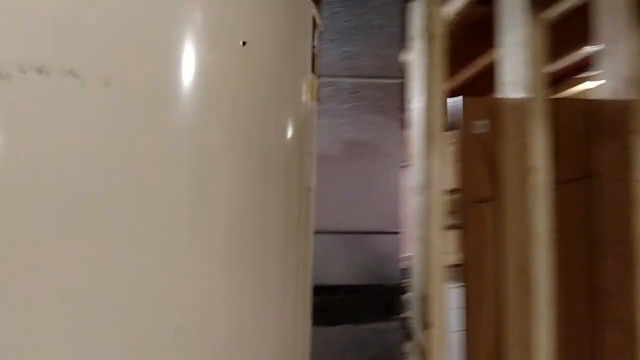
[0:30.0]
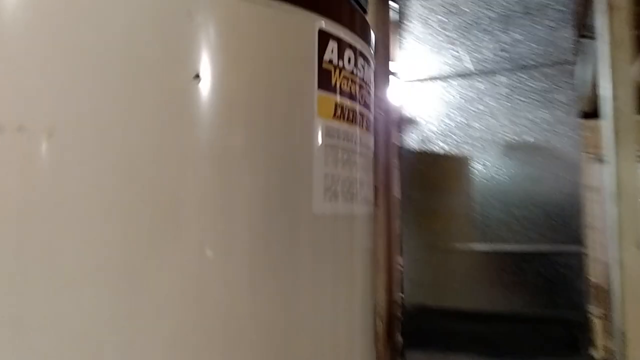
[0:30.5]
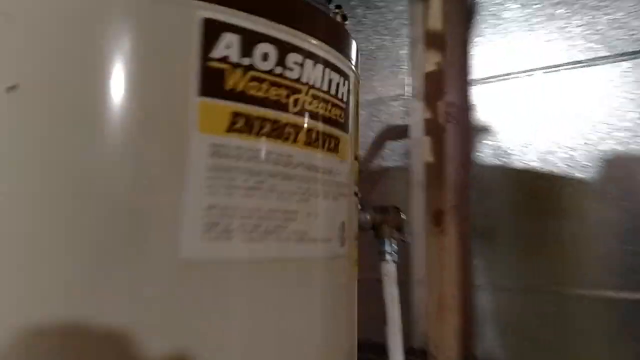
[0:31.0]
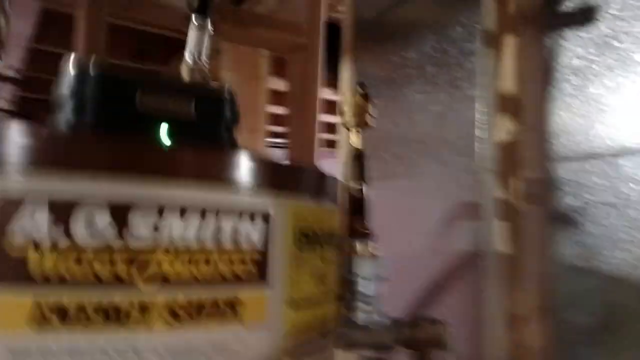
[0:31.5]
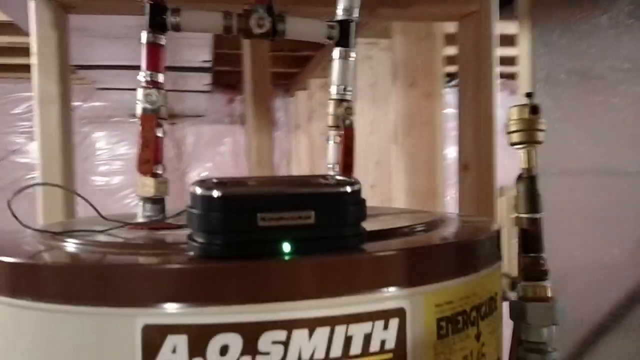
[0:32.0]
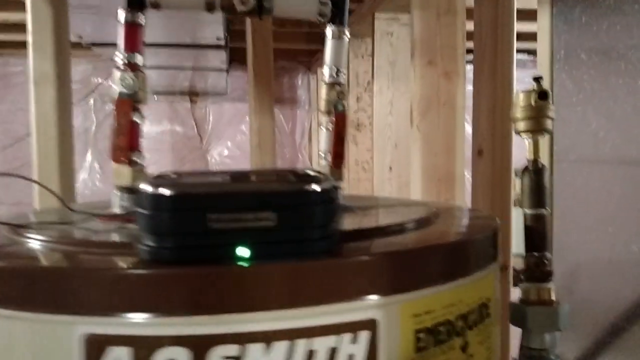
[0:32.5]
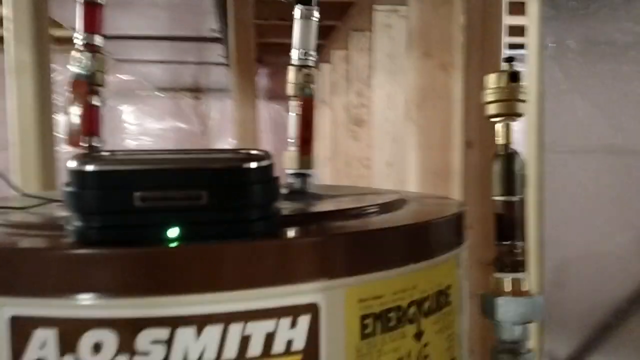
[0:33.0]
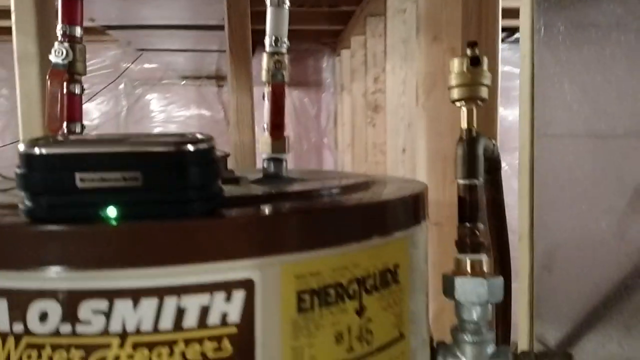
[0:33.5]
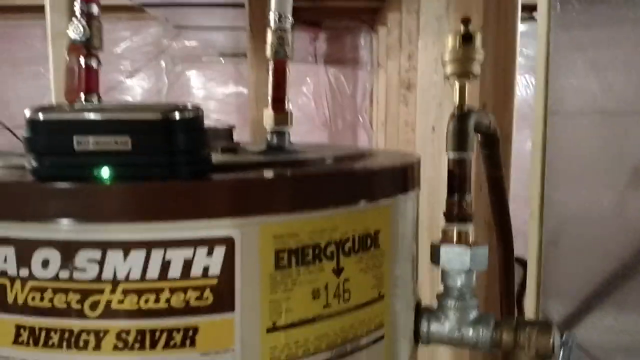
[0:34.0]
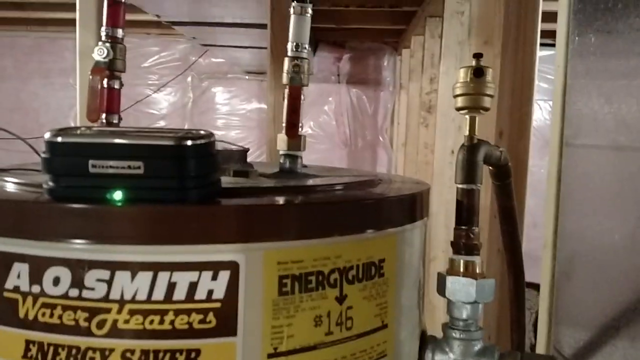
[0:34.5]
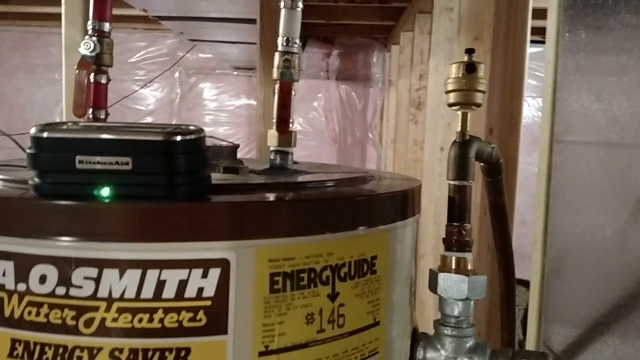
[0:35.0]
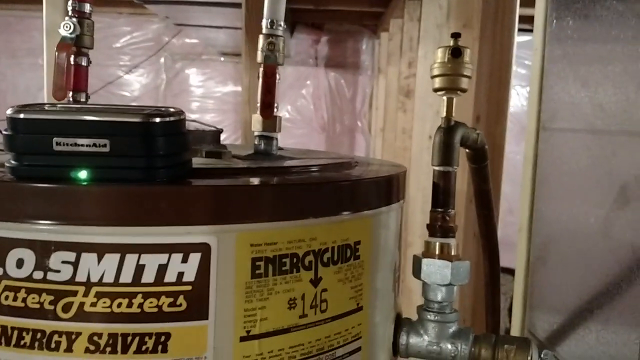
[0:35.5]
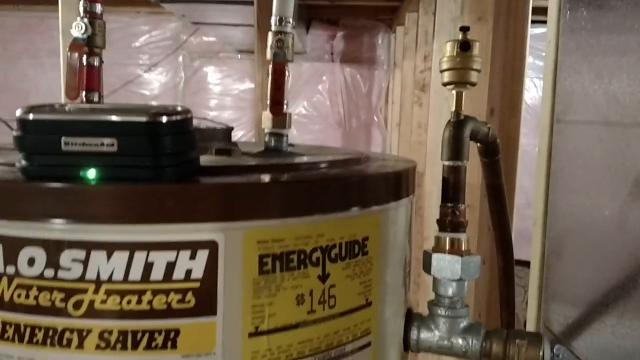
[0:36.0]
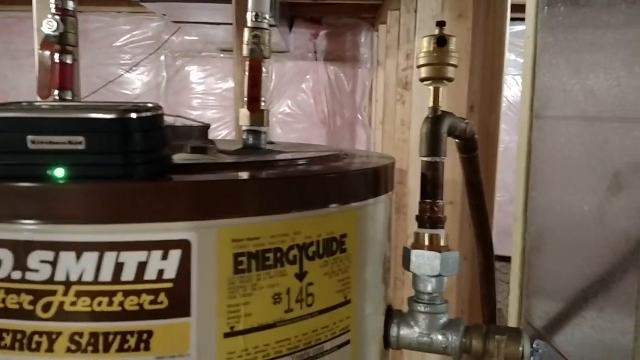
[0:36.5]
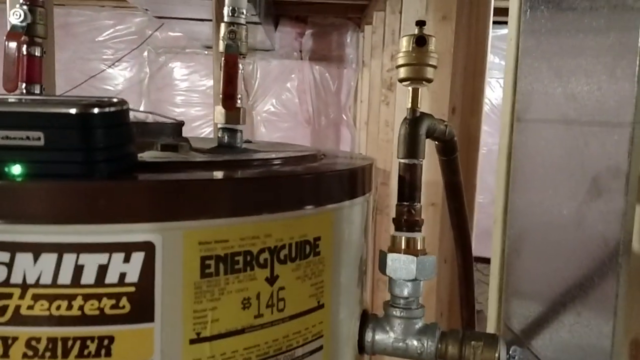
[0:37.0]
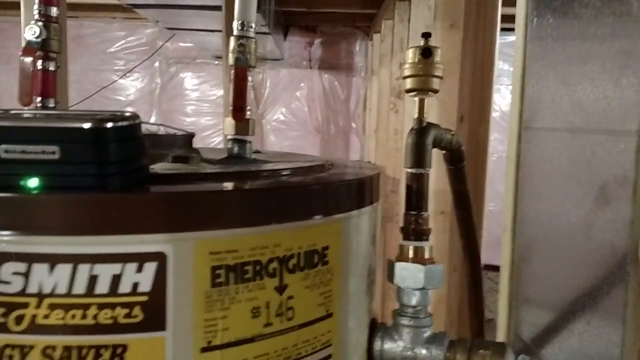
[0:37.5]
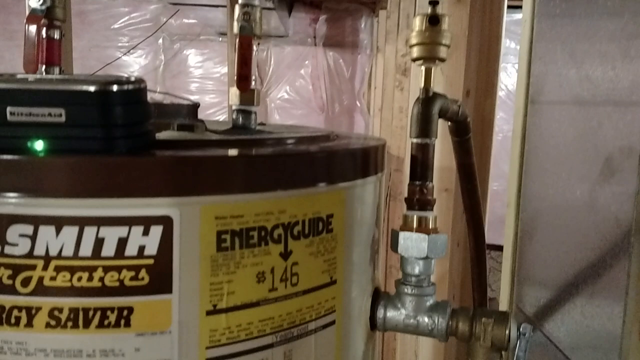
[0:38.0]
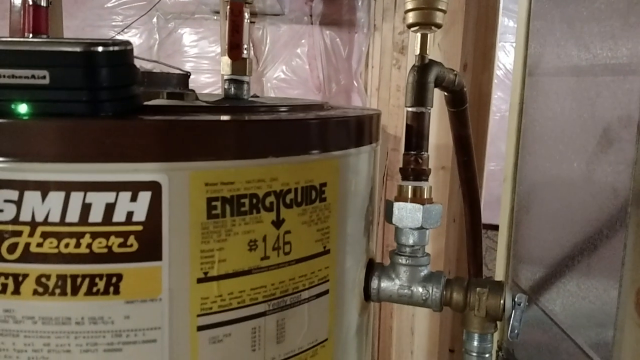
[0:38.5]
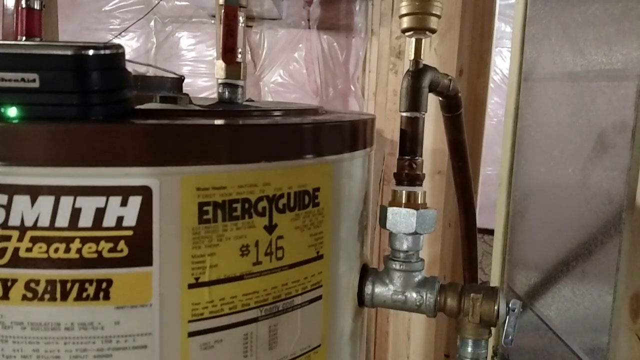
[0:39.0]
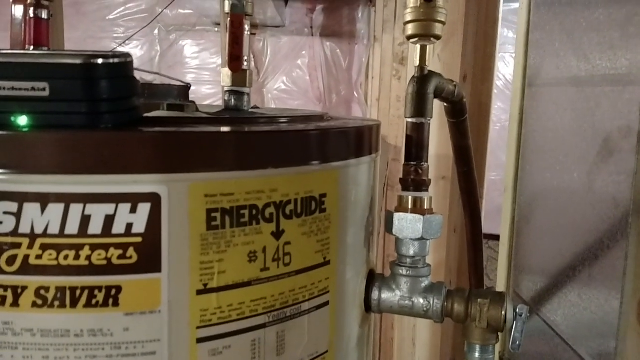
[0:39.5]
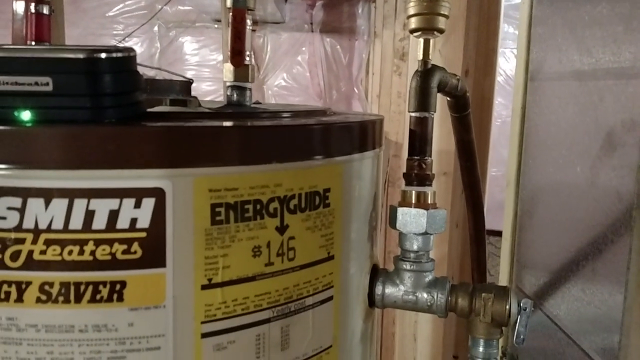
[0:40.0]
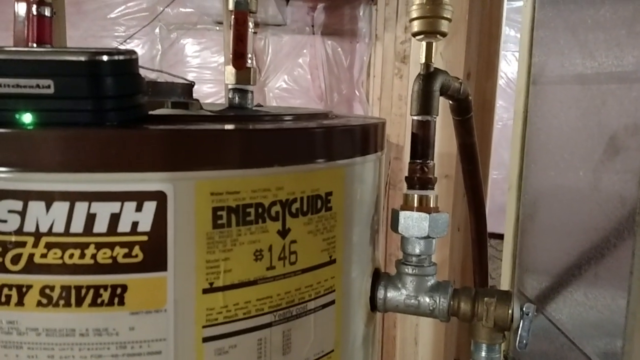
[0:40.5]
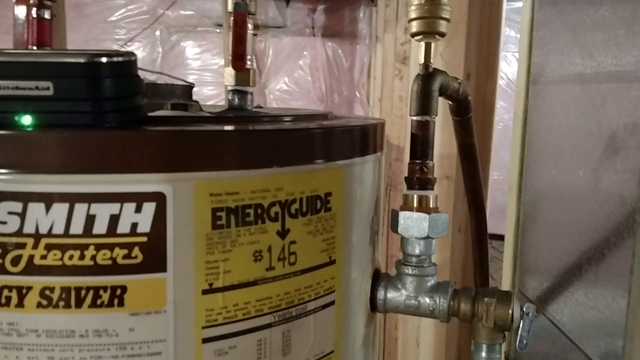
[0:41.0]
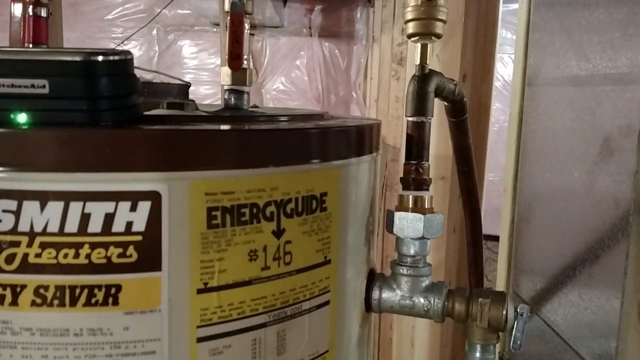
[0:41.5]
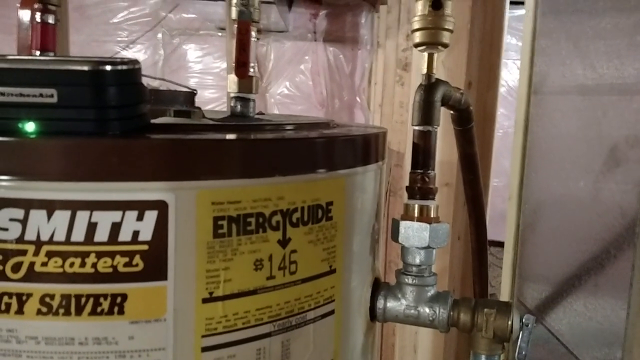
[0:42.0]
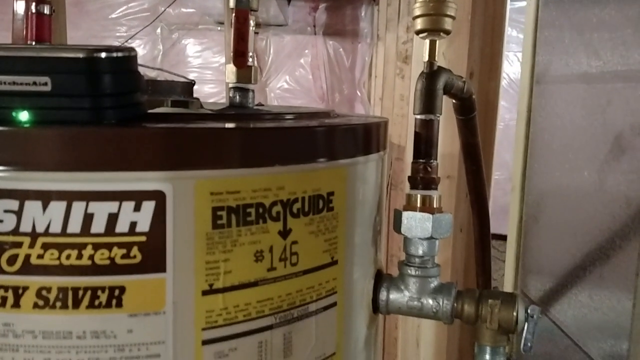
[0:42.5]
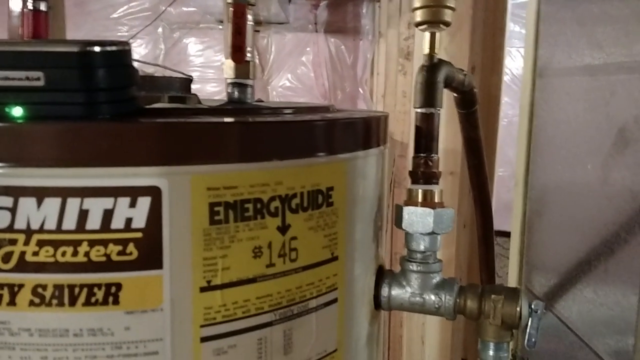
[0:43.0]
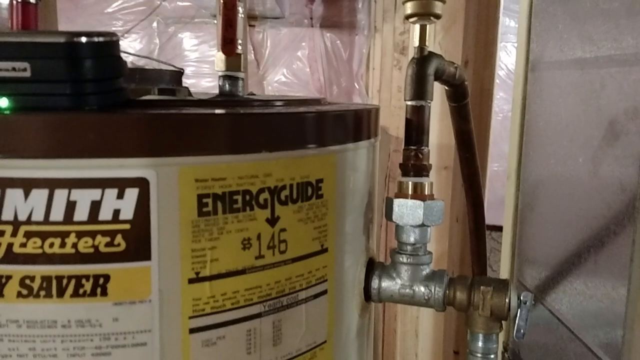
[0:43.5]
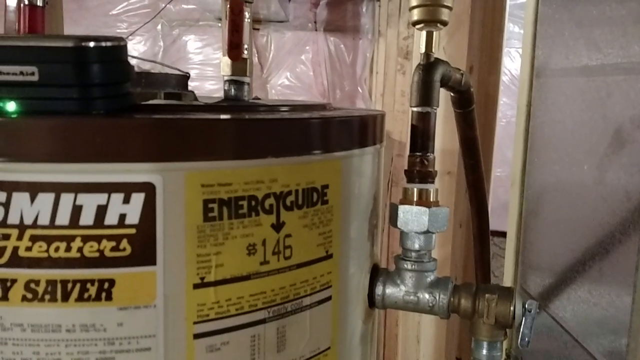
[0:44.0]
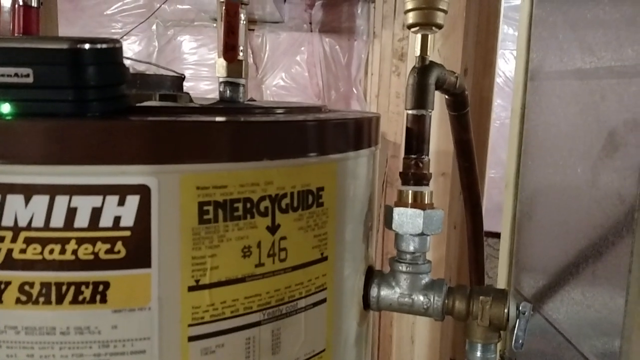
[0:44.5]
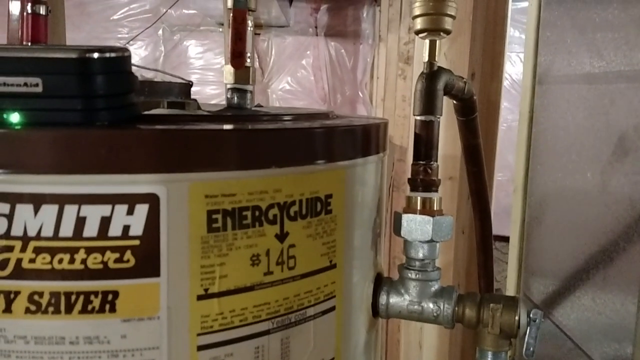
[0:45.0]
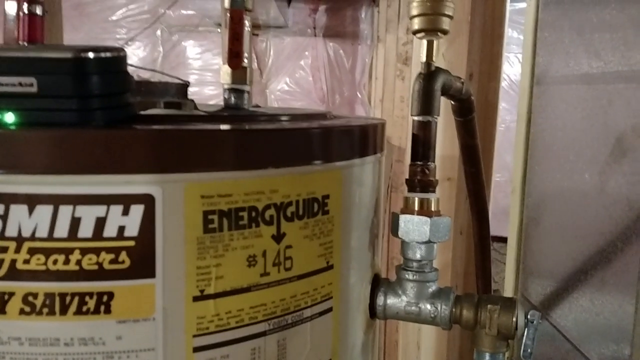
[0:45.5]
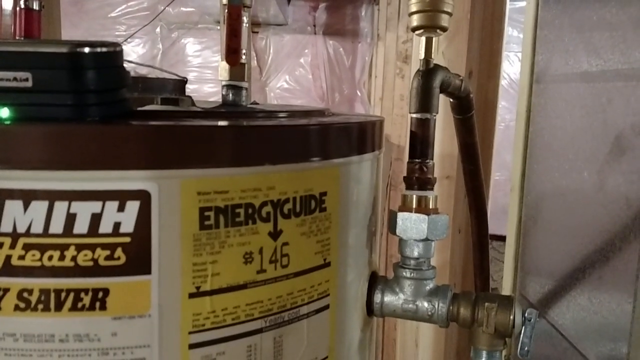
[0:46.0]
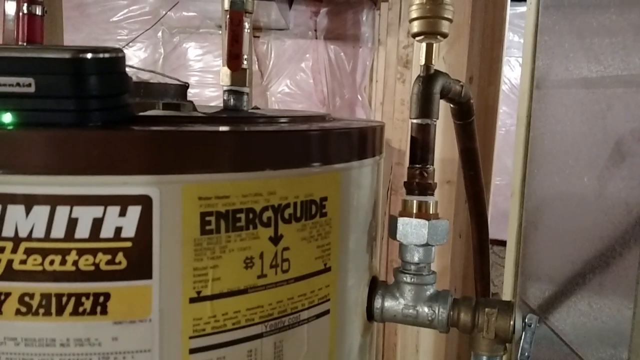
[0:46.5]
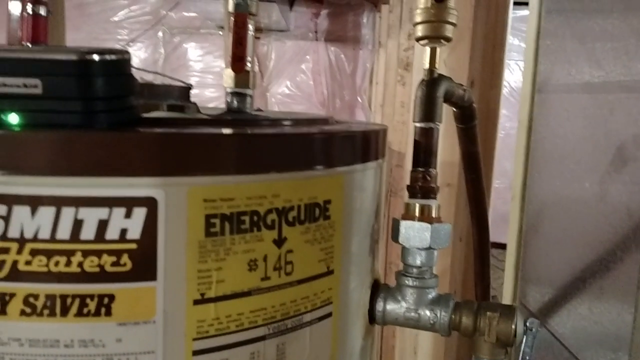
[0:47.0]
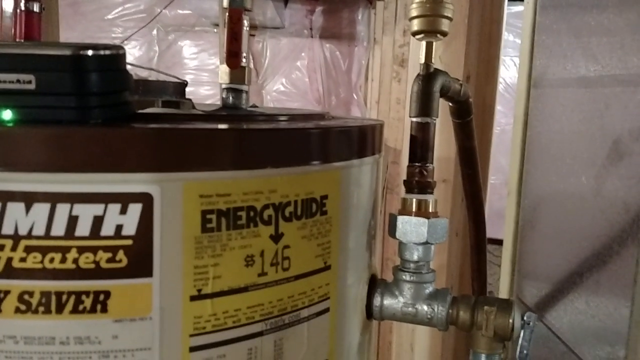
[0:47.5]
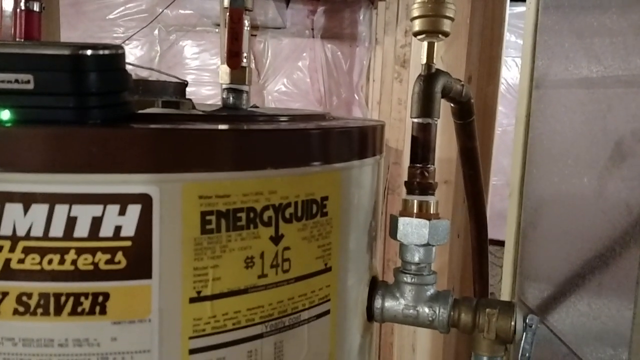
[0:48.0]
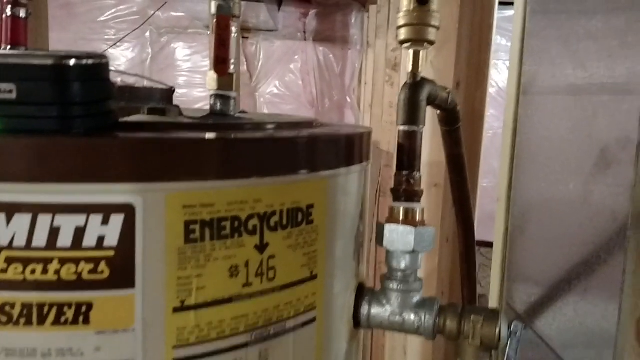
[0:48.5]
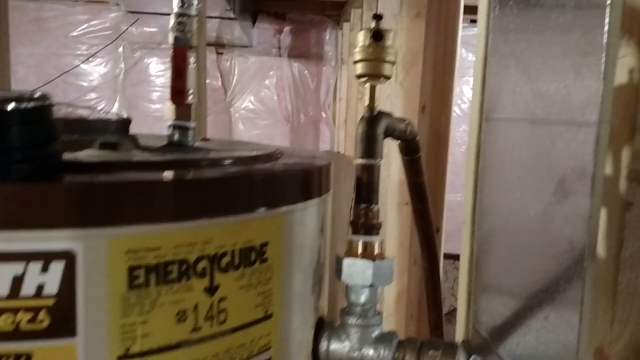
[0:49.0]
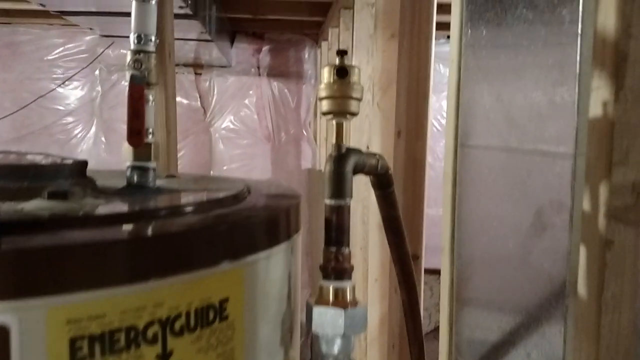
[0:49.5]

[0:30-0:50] A fireplace with a well-lit fire is in a room that looks like a living room and also a warehouse. Pipes are connected at the back of the fireplace and connect to the energy source; pipes go up to the roof, where the energy source is. A very big tank supplies the energy to the fireplace. The tank is by A. O. Smith and seems to be energy saving, with "energy guide" written on it. Pipes run from the energy guide back to the fireplace, and the tank seems to be using gas.